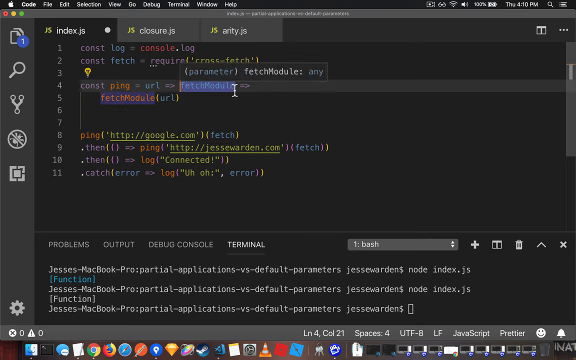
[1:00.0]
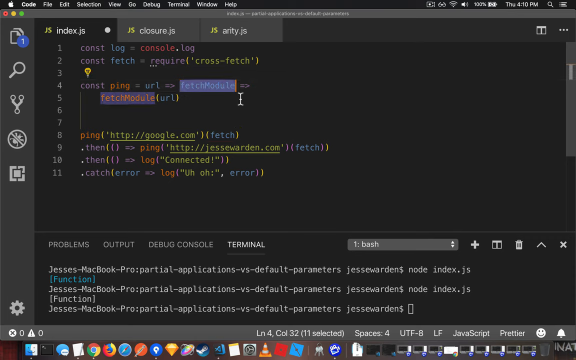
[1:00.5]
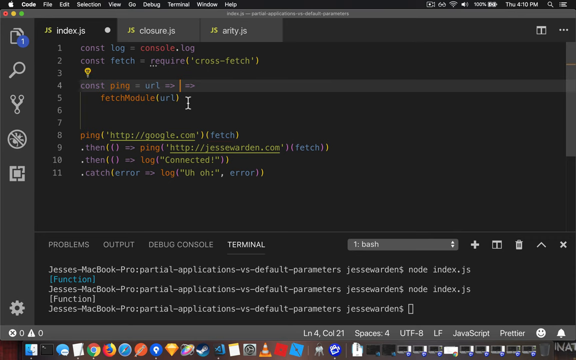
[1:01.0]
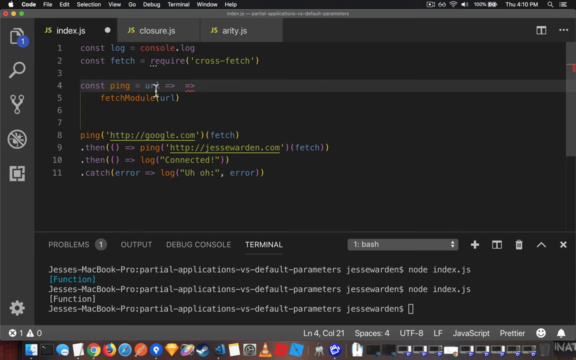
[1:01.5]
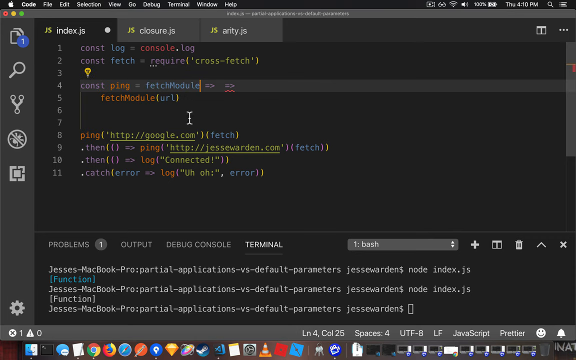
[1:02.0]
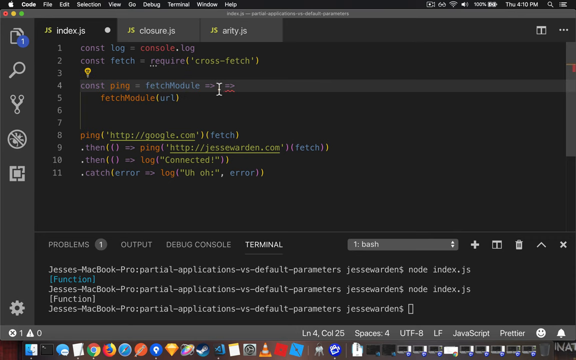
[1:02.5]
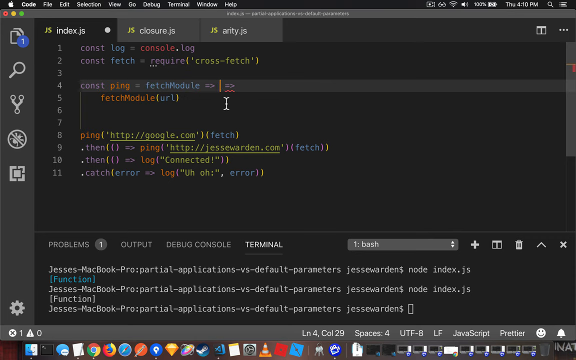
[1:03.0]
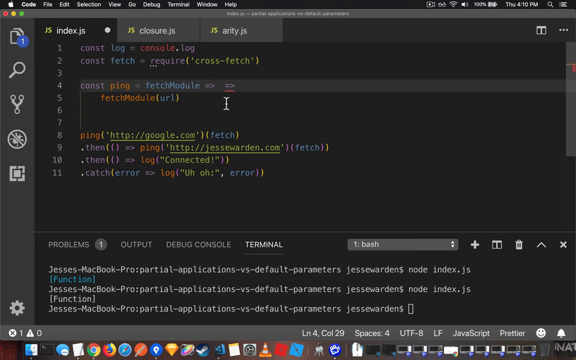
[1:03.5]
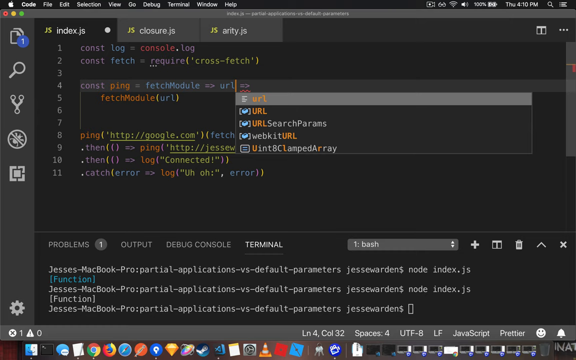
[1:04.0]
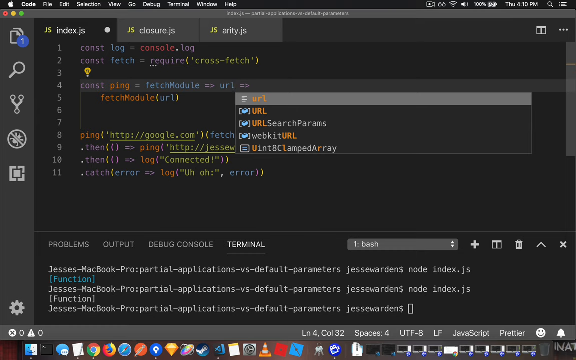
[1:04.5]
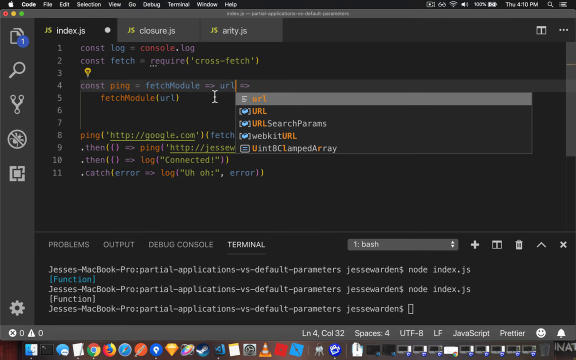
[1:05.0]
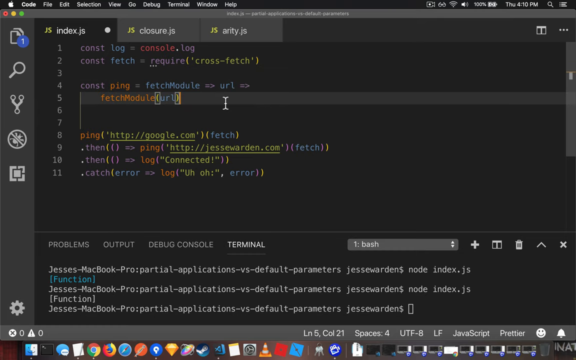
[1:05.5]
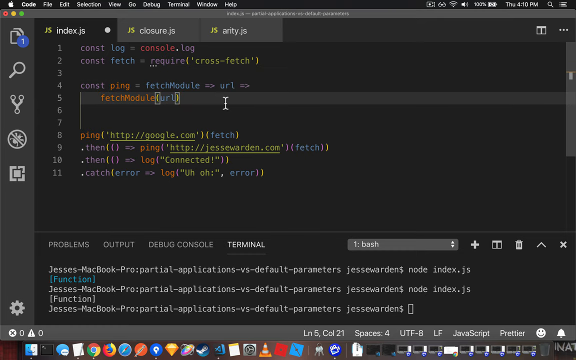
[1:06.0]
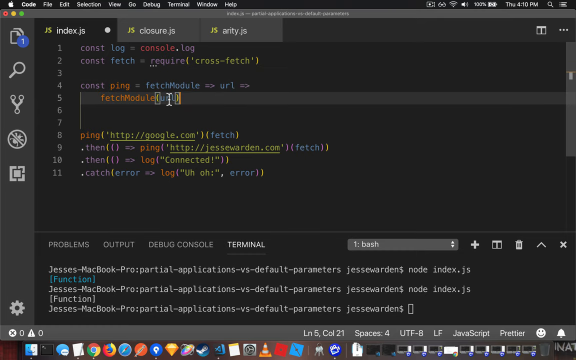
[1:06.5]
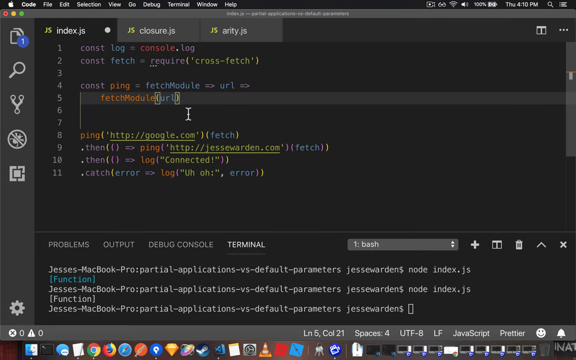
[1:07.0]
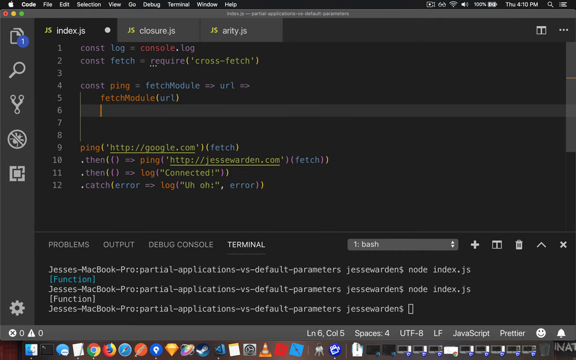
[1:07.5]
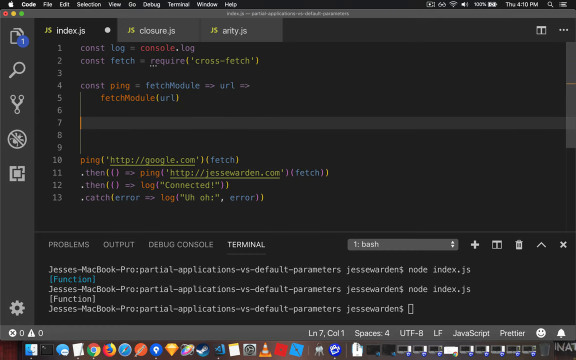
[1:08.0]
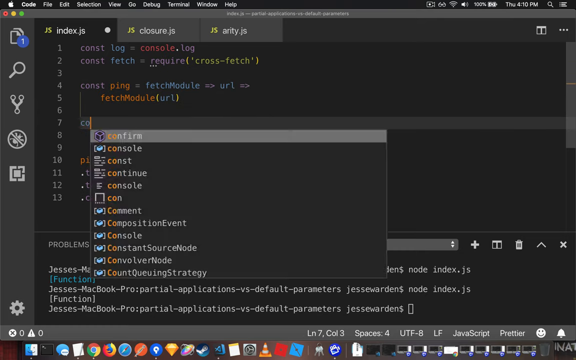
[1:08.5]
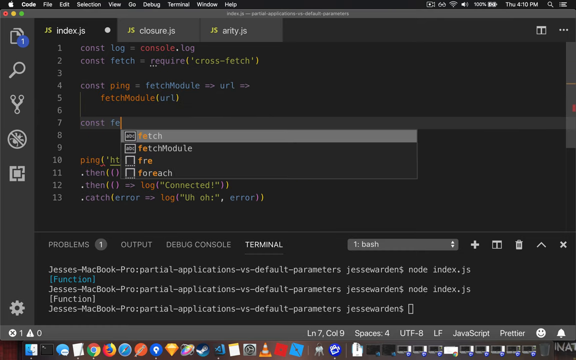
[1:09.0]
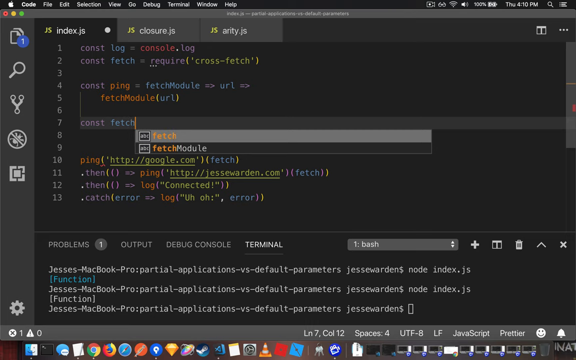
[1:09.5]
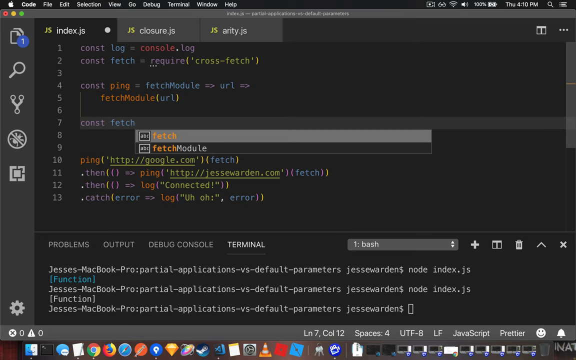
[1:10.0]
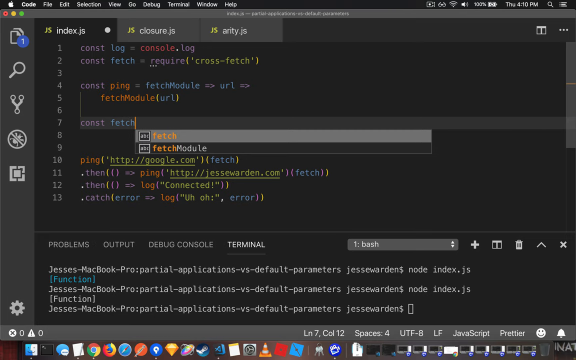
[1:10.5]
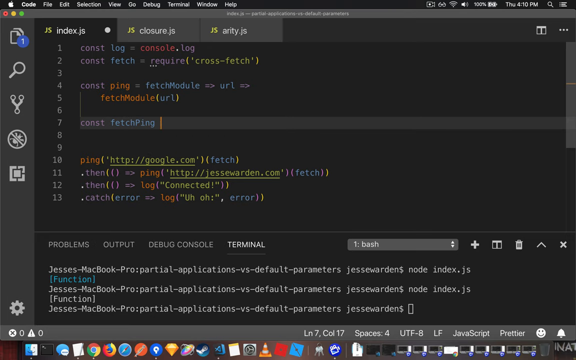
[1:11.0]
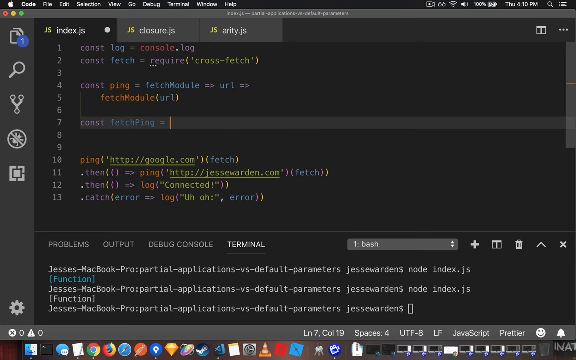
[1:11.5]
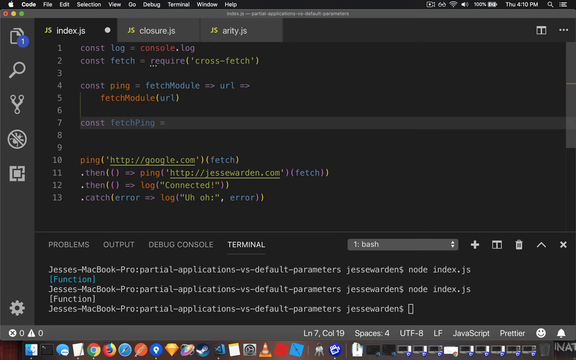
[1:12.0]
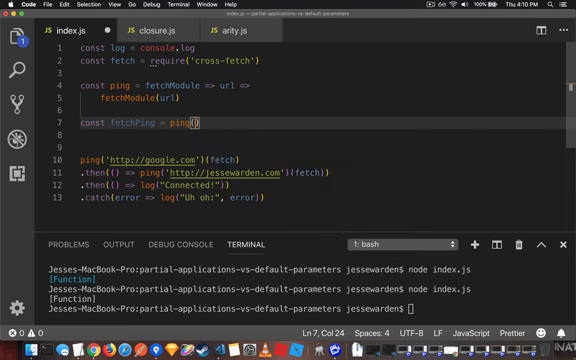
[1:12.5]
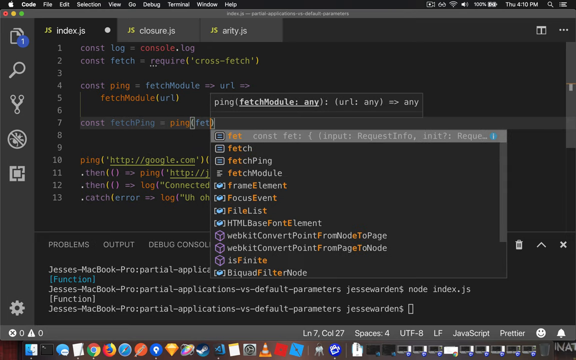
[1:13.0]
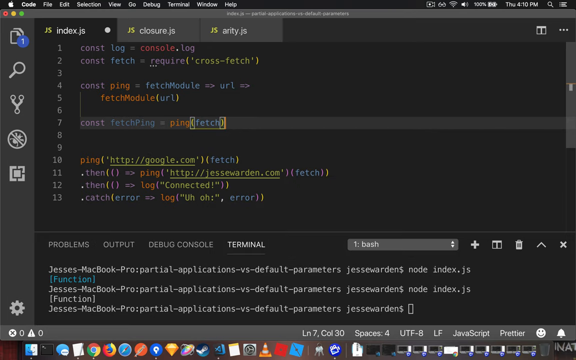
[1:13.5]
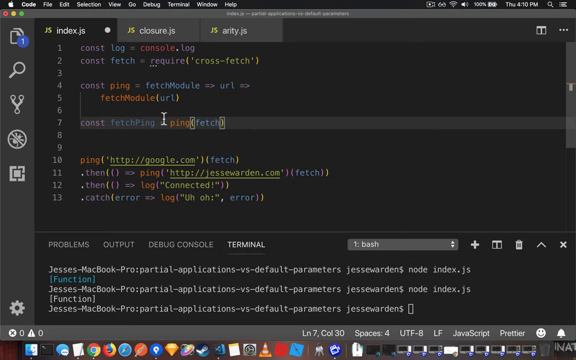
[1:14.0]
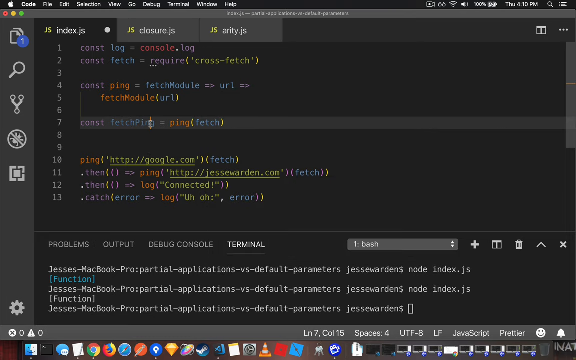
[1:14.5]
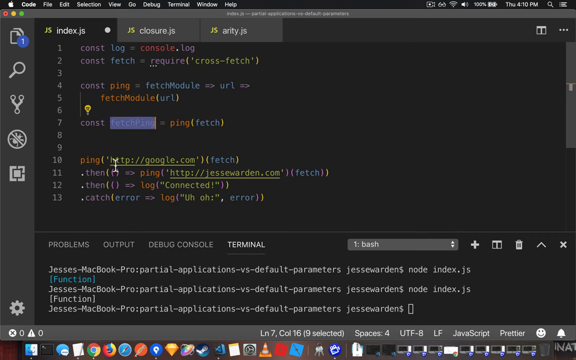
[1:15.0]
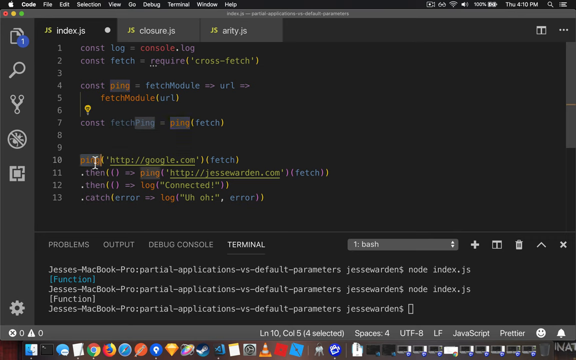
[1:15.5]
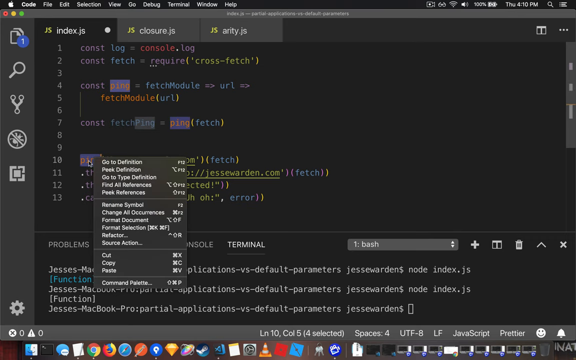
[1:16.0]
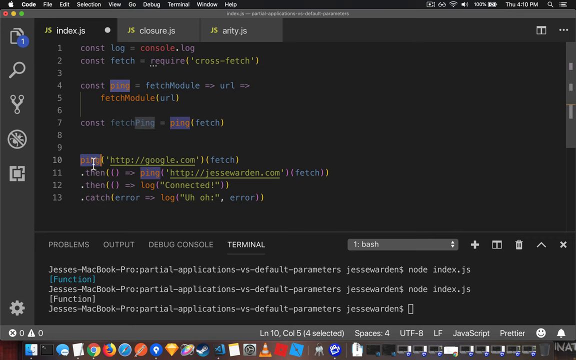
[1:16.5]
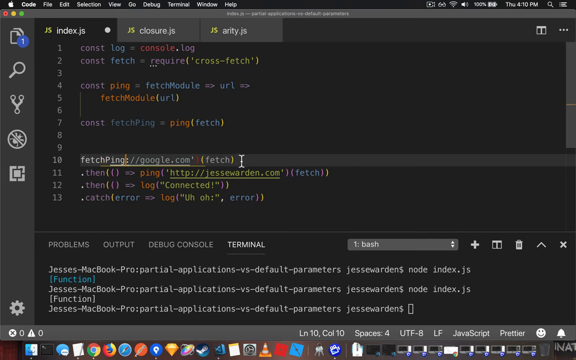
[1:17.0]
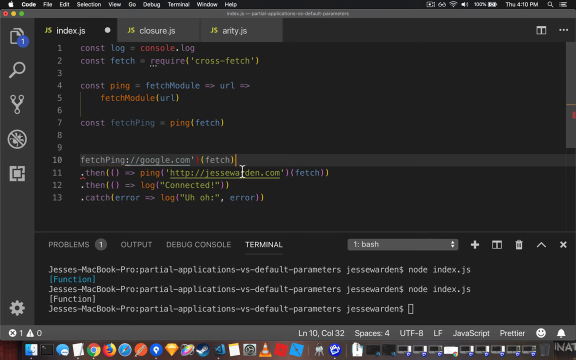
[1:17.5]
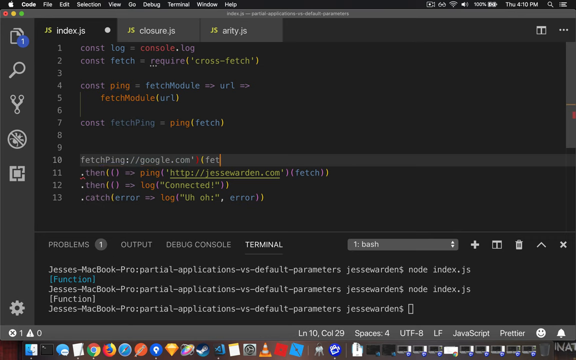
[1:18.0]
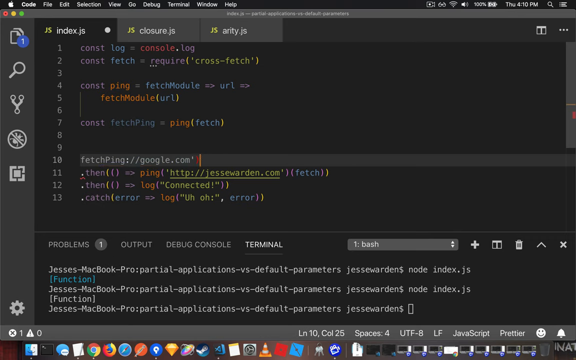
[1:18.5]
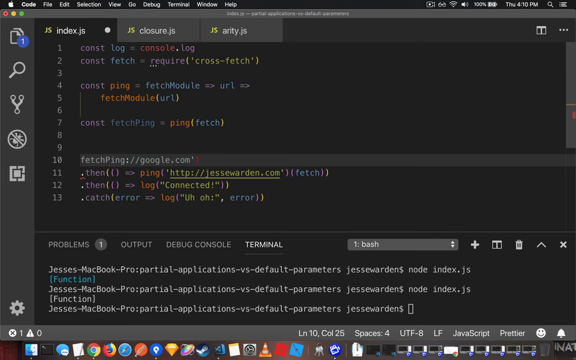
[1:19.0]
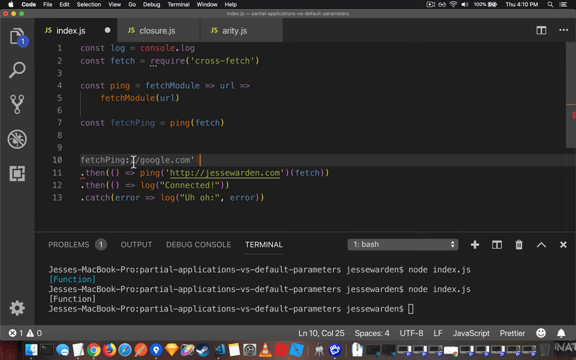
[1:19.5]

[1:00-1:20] Code in purple, blue, yellow and orange text appears to be modified on an Apple platform, with the Apple navigation bar visible at the top. The code is 11 lines long, numbered in white on the left side, and "index.js" appears, so it is probably JavaScript. Part of the code reads "const log equals const.log, const fetch equals require cross-fetch, const ping URL equals fetch module, fetch module URL, ping google.com, fetch then ping jessewarden.com, fetch then log connected, catch error log, uh-oh, error." Fetch module is highlighted with the mouse cursor over it, and it is double-clicked. It is cut and put back where URL was before it, and URL is typed afterwards, so the line now reads "const ping equals fetch module URL," with line five underneath reading "fetch module URL." The cursor clicks after it, enter is pressed twice for two new lines, and "const fetch ping equals ping fetch" is typed. Fetch ping then appears to be double-clicked, and the ping before HTTP google.com is right-clicked and the text pasted, so it reads "fetch ping google.com fetch." The fetch after google.com is then deleted.